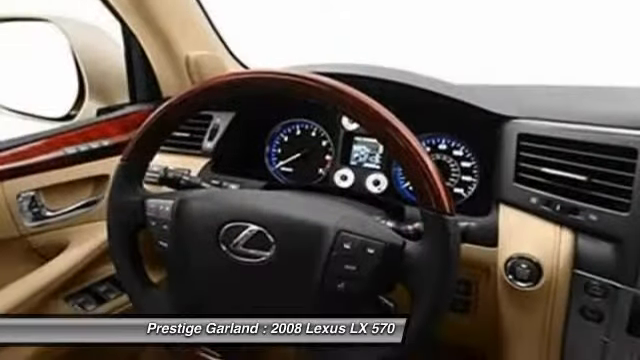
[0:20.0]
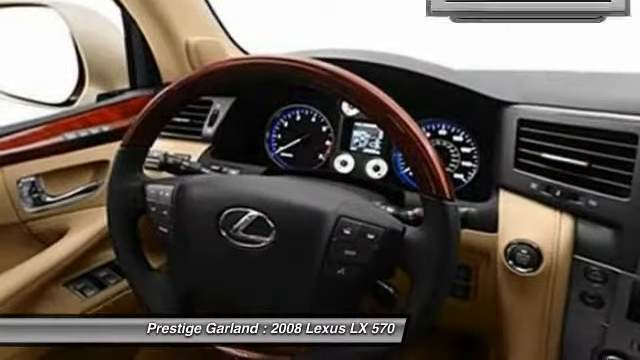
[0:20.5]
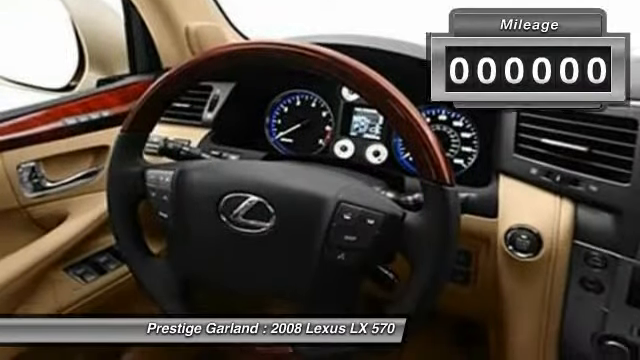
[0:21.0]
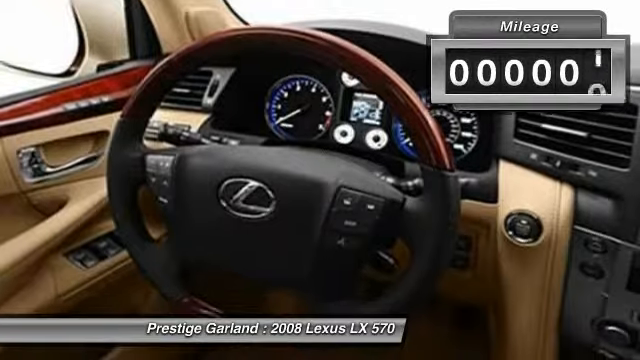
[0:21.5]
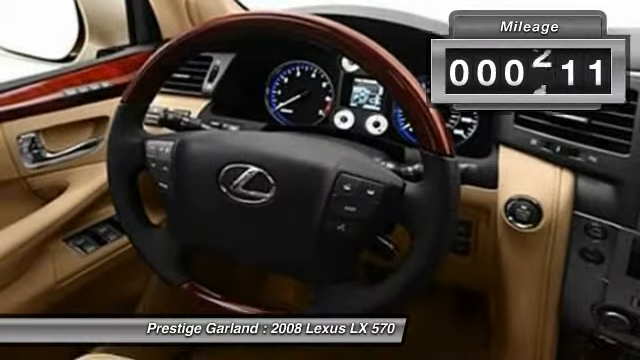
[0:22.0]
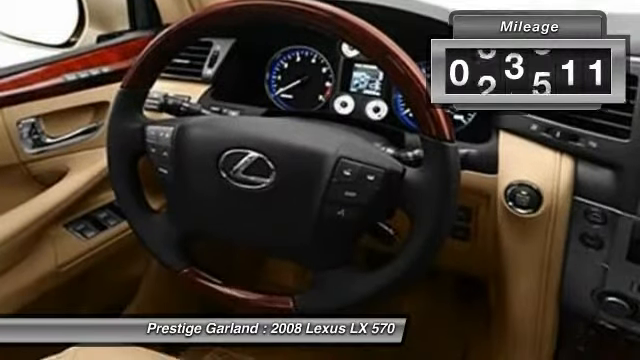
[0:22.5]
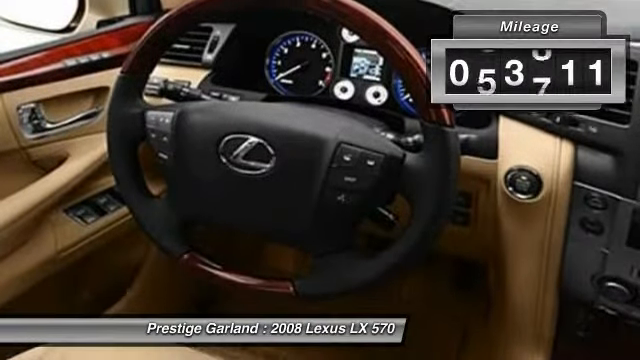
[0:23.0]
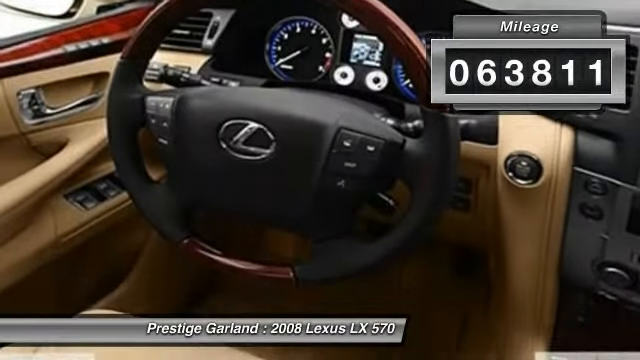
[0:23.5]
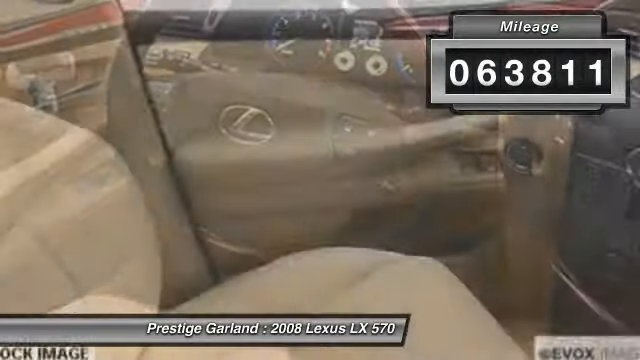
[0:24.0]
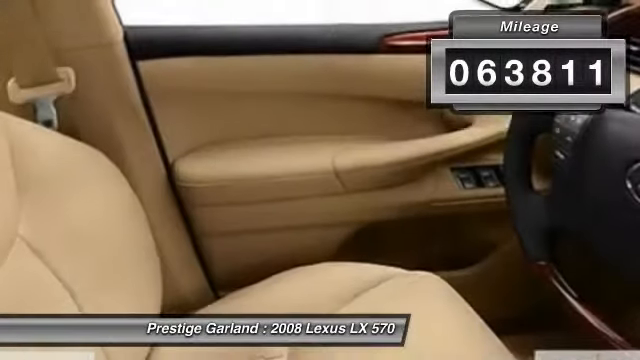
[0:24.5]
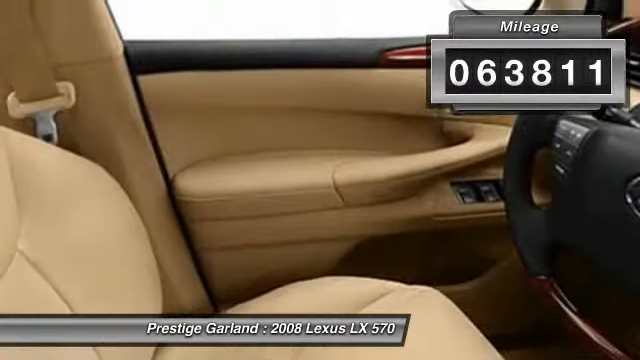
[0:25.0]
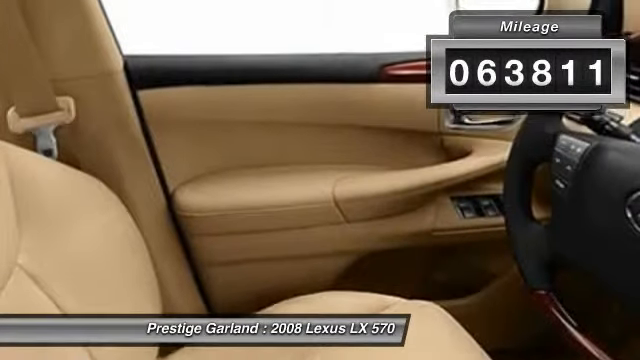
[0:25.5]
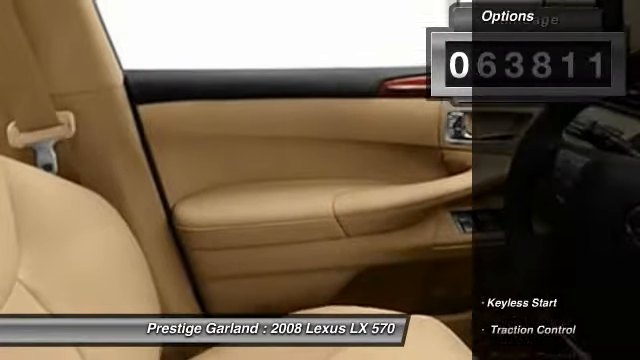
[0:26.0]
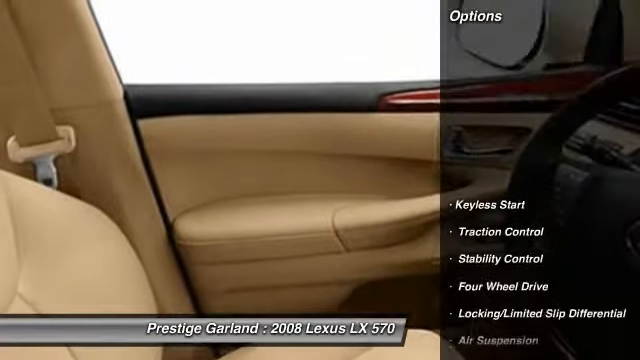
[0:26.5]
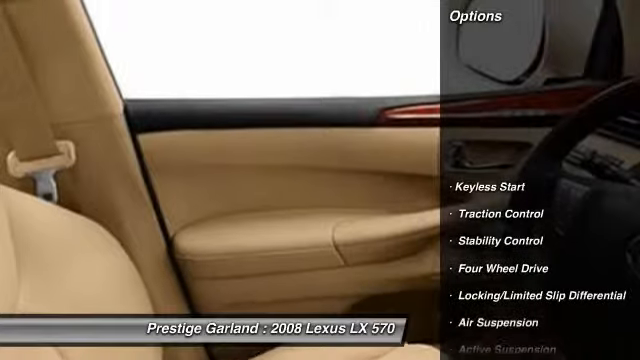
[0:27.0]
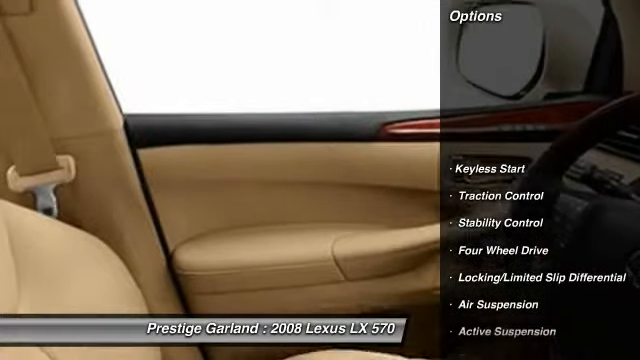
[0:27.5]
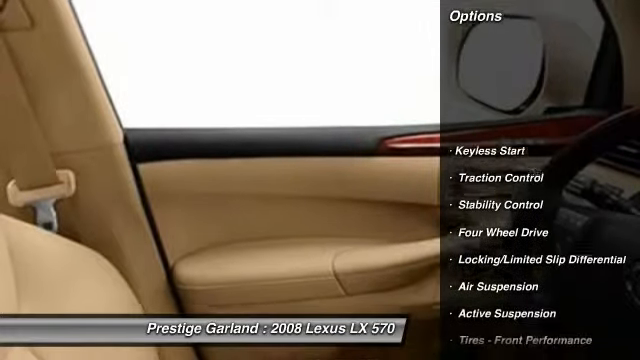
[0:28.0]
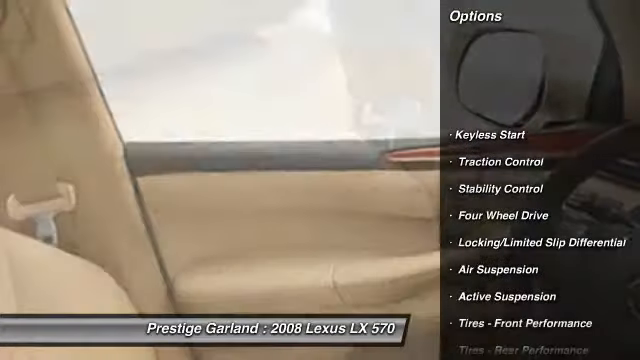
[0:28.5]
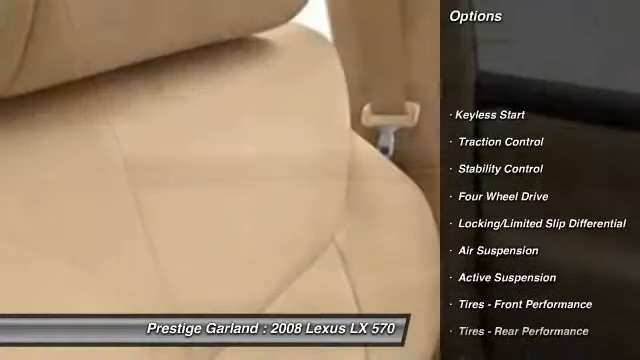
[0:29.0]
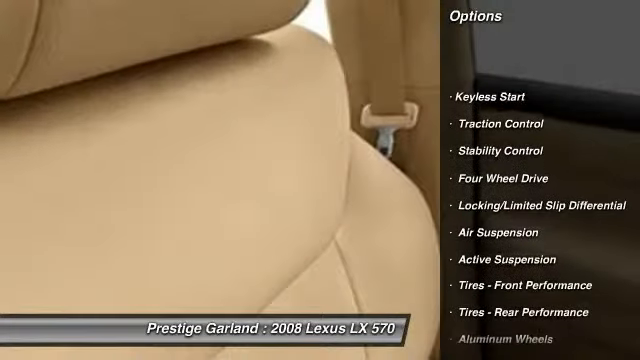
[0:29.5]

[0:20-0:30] The inside of the car is shown, including the dashboard and the steering wheel. The view scrolls down and text reads "Prestige Garland 2008, Lexus LX570". In the top right-hand corner, a box pops up that says "mileage"; it starts at zero miles and then changes to the car's mileage, 63,811. The shot changes to the inside of the driver's side and the door, which is a gold color. On the right, a black box pops up that says "options", and the car's different options begin scrolling in bullet points.